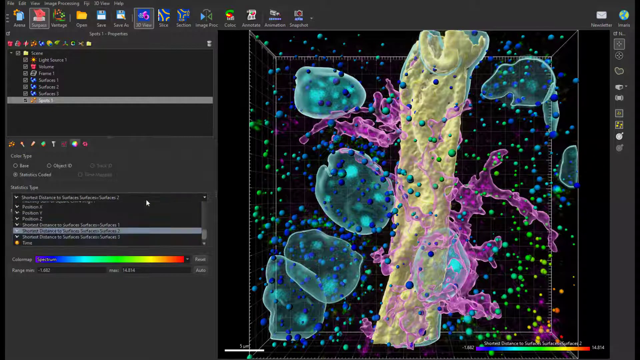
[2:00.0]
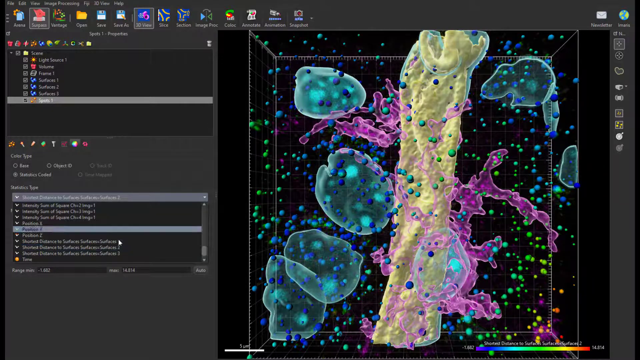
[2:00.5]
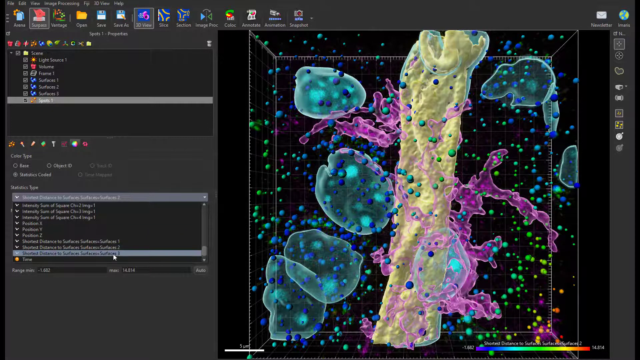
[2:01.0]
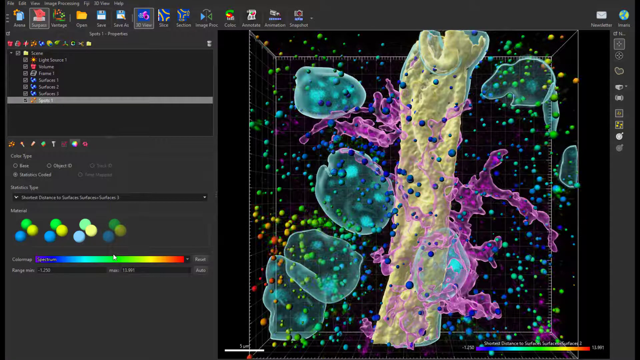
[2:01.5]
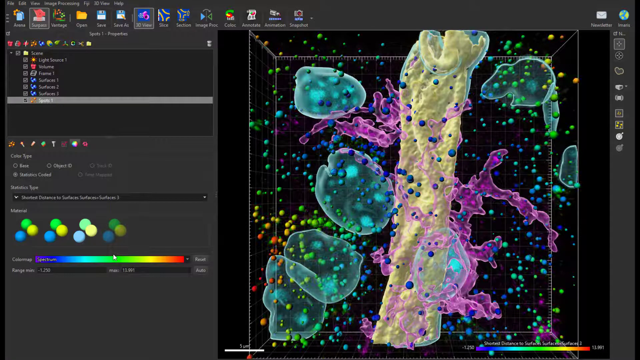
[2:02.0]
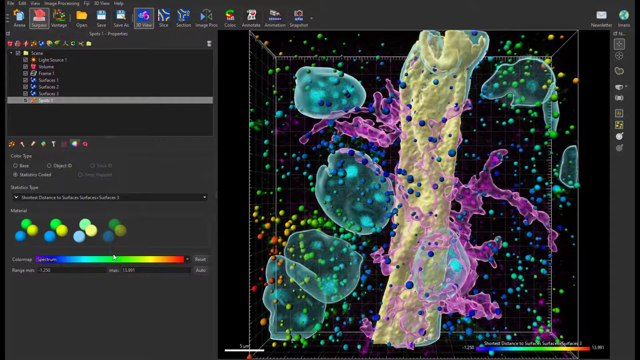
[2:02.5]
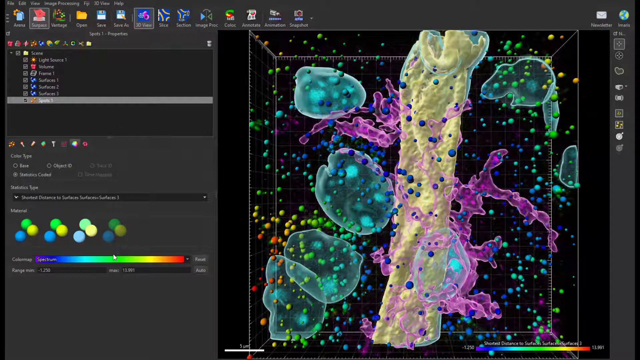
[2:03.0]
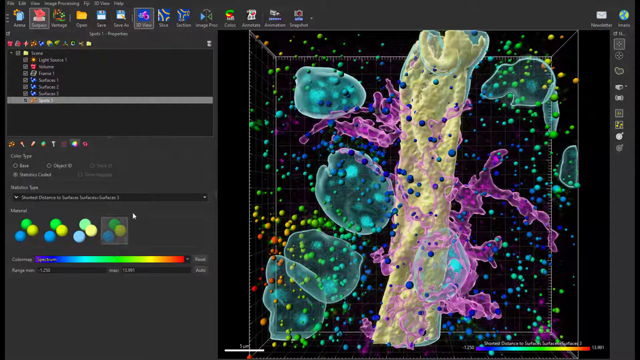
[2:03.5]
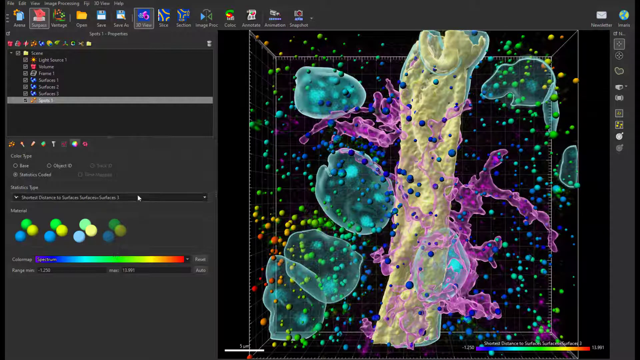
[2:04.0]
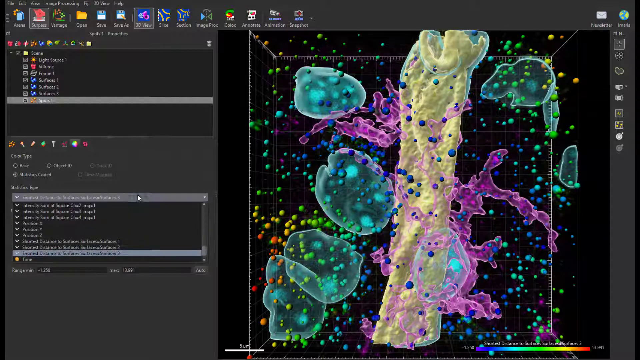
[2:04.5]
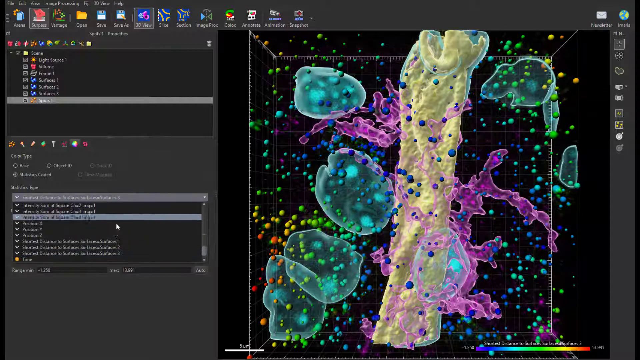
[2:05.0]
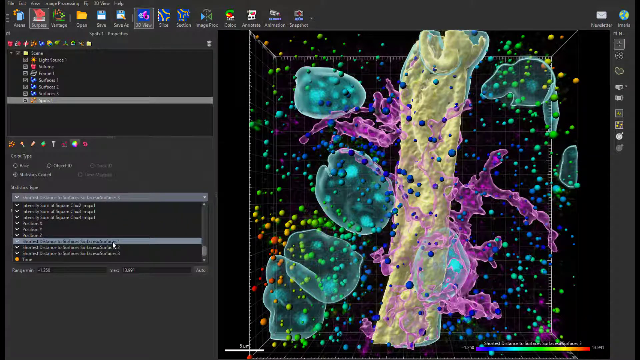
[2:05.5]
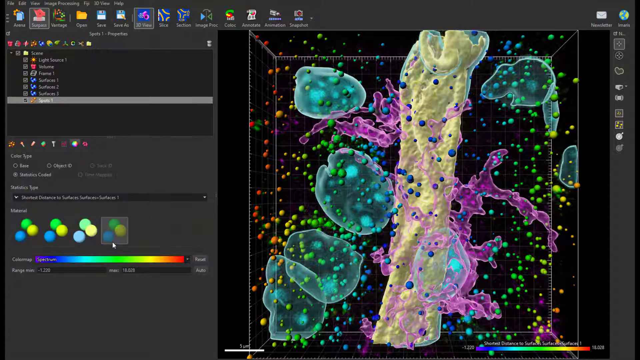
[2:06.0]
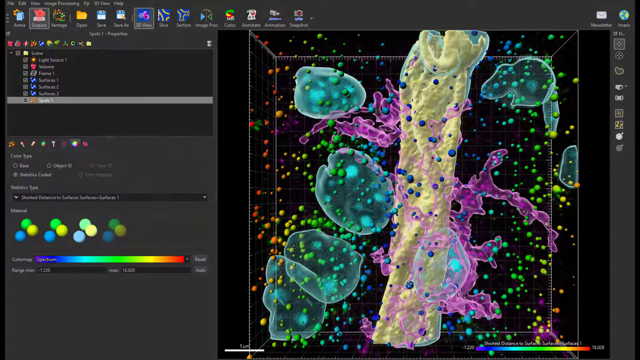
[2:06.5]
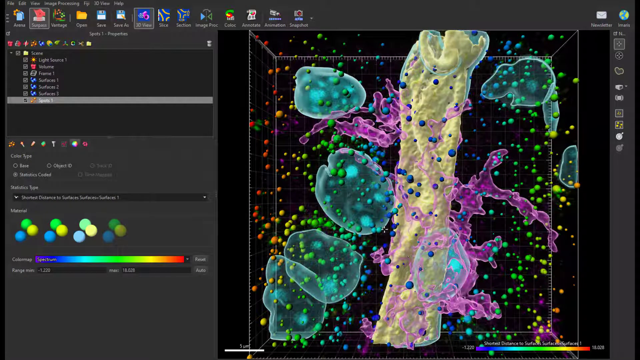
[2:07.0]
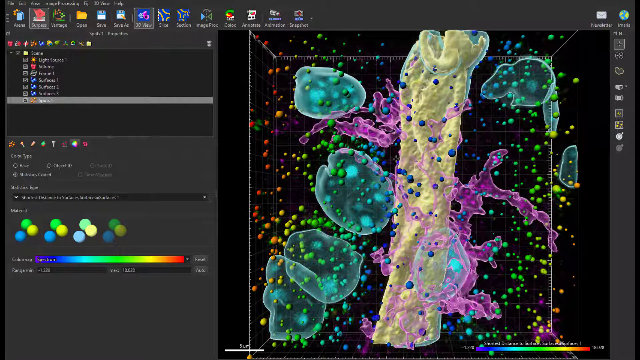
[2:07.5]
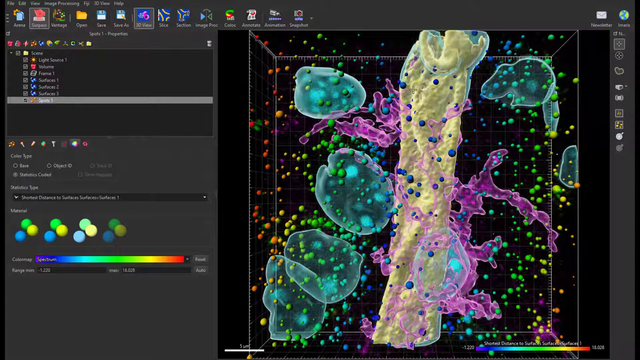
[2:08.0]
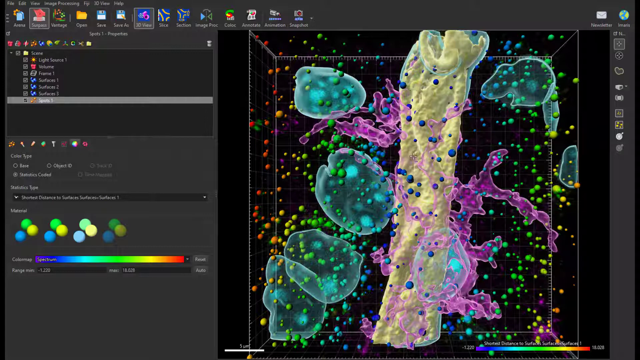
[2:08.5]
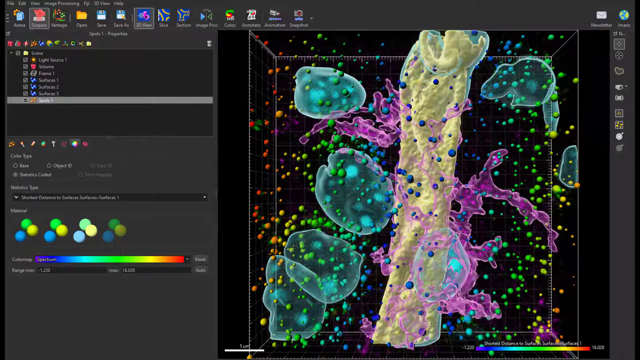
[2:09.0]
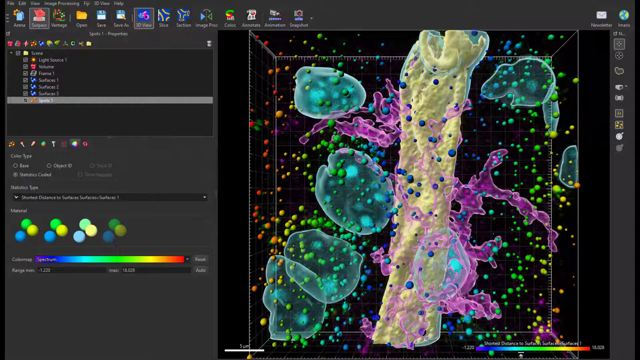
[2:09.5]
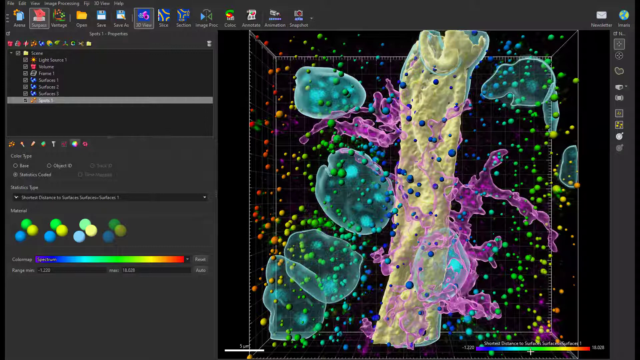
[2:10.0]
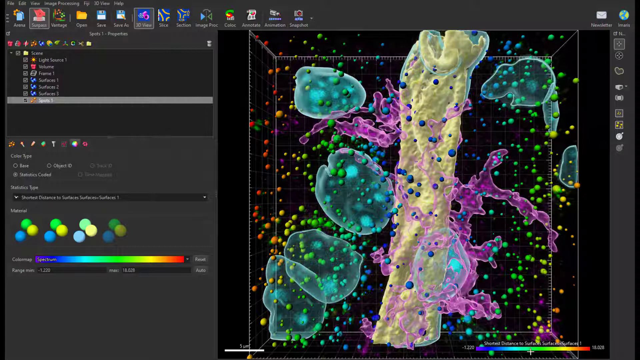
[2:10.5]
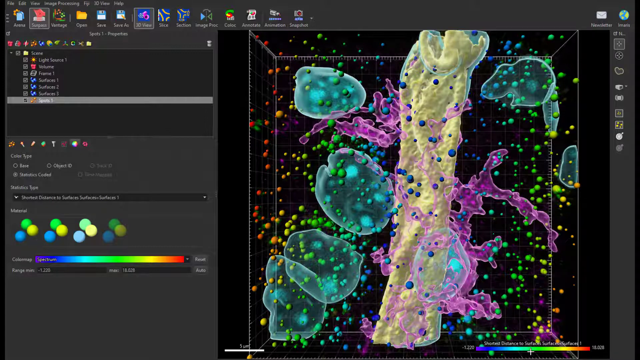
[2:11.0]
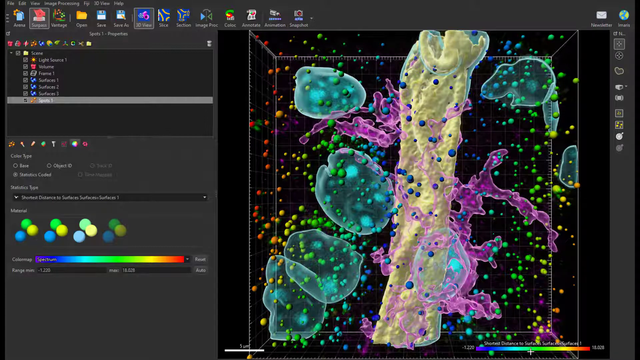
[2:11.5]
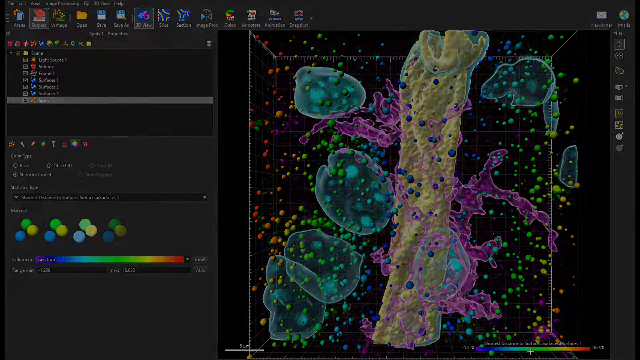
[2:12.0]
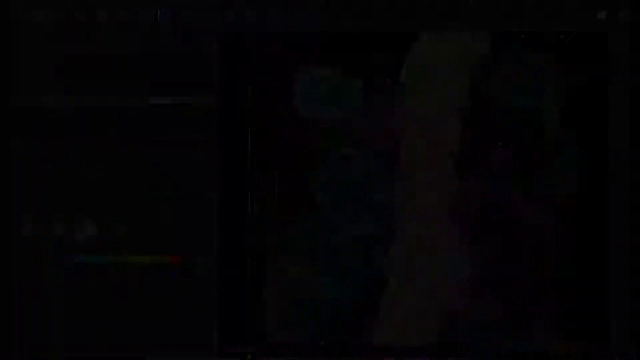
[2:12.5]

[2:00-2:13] The mouse pointer moves around as if clicking on things, and a little X shows up on the screen when it clicks, though it is unclear what is being edited or fixed. Even though the person clicks on items on the left side and on different tabs, nothing changes. The ball colors from left to right stay the same: red, orange and yellow balls, green balls, turquoise and blue balls, and green balls.